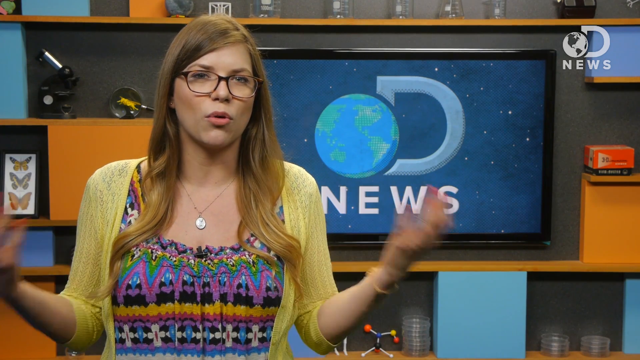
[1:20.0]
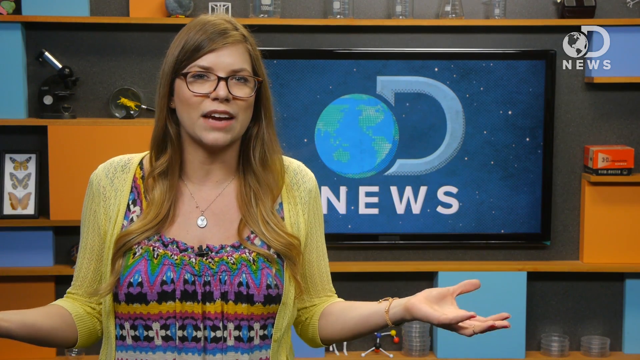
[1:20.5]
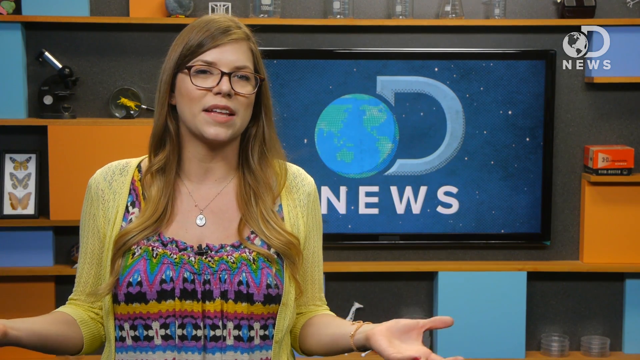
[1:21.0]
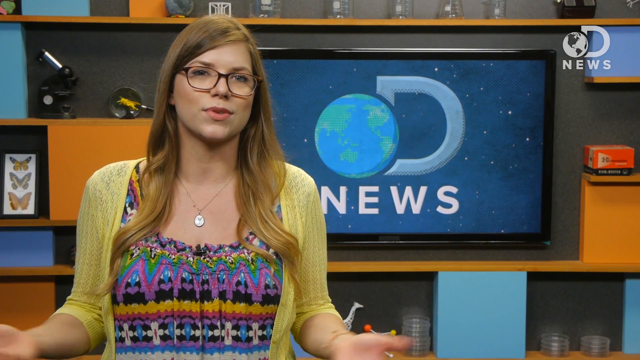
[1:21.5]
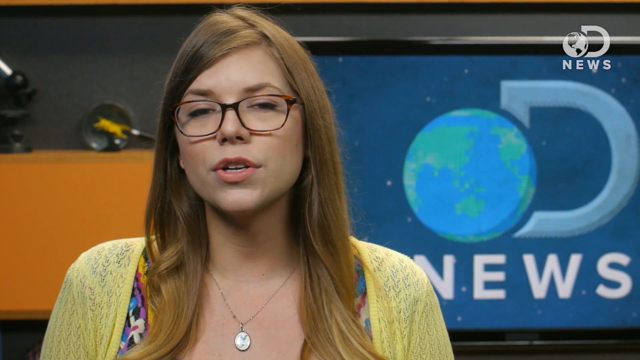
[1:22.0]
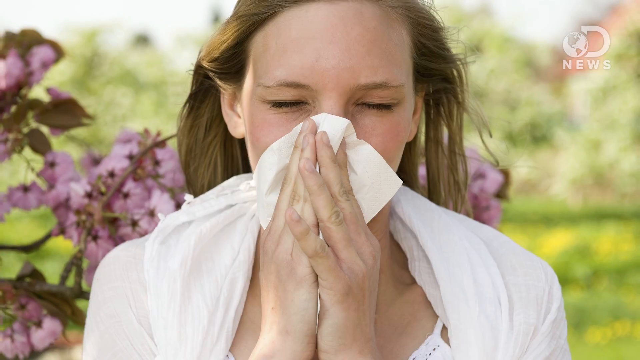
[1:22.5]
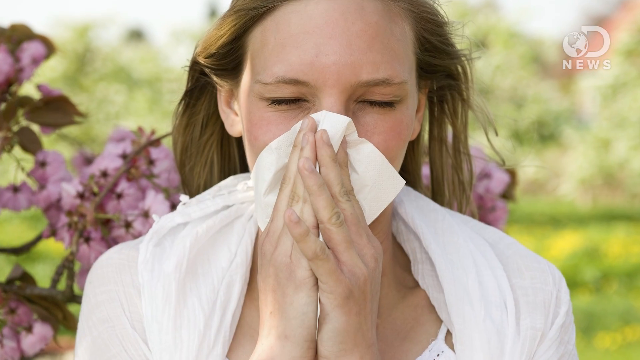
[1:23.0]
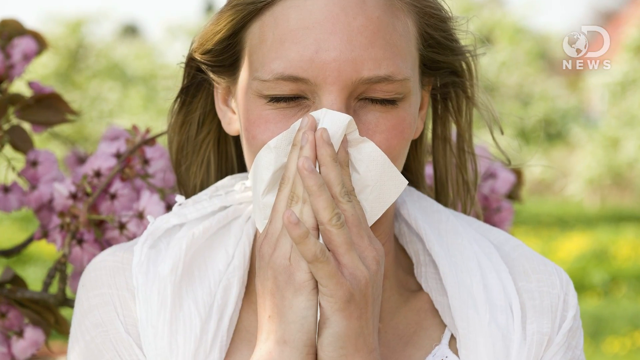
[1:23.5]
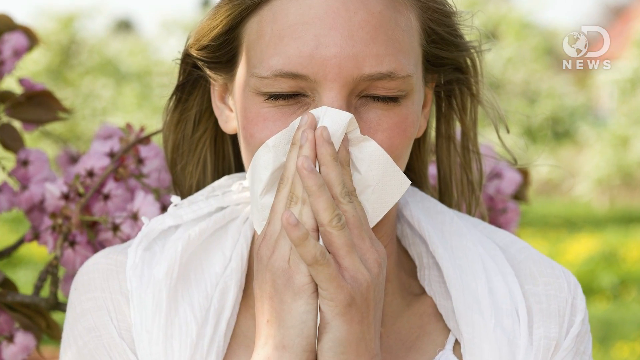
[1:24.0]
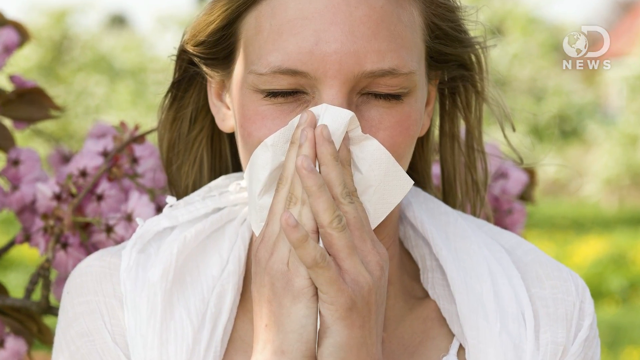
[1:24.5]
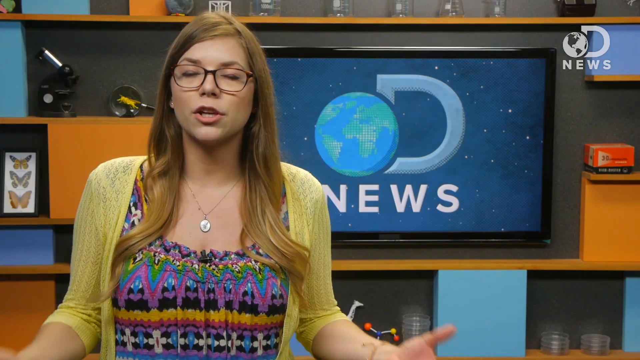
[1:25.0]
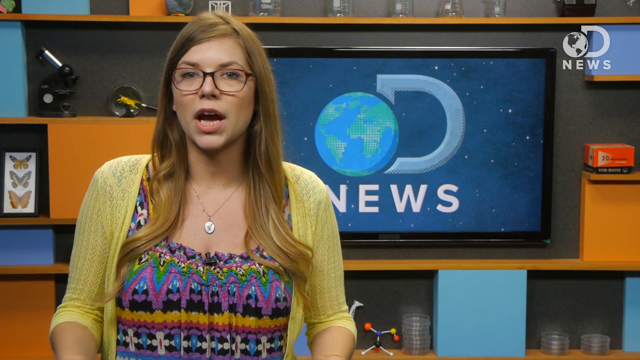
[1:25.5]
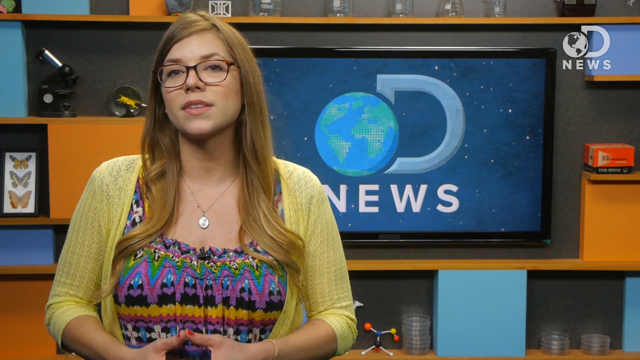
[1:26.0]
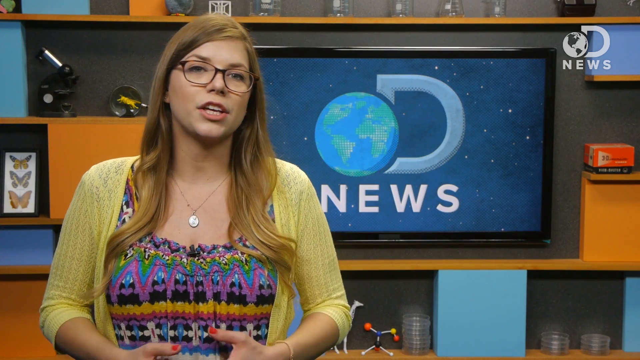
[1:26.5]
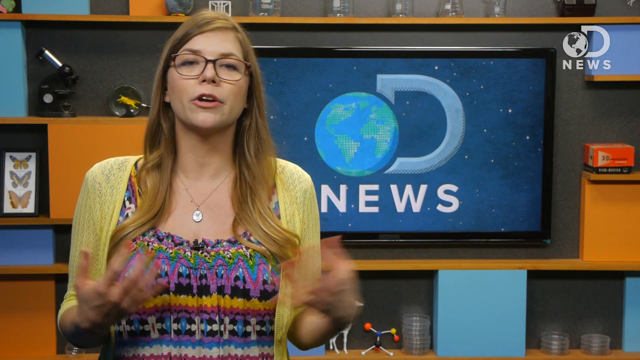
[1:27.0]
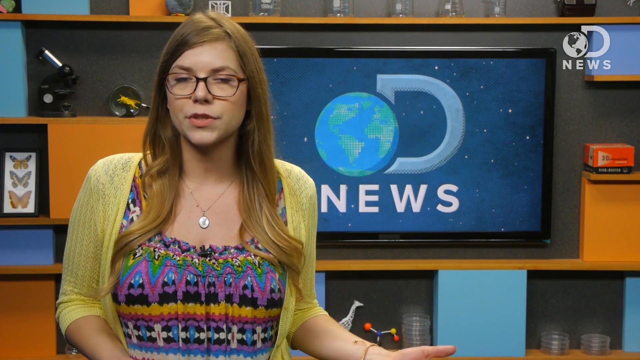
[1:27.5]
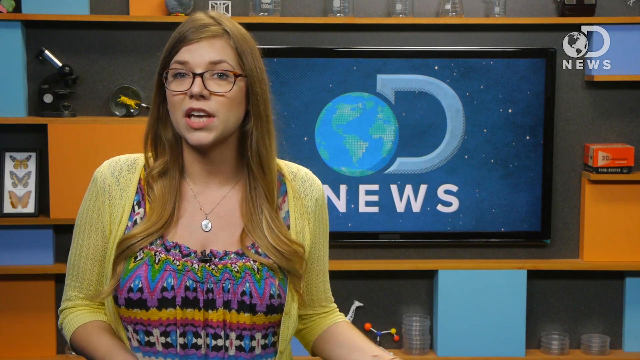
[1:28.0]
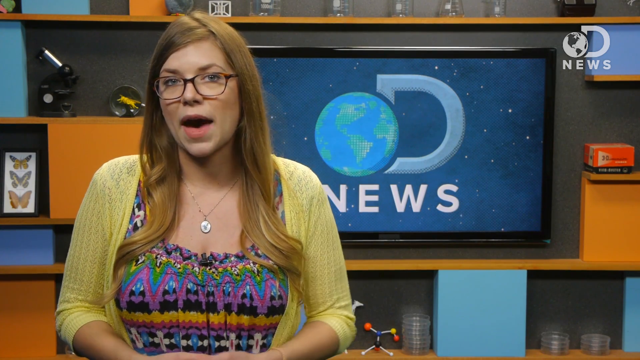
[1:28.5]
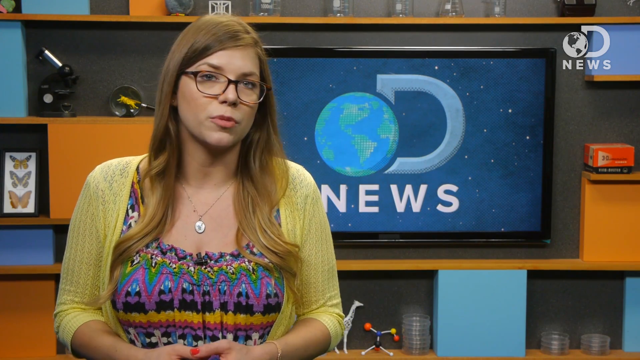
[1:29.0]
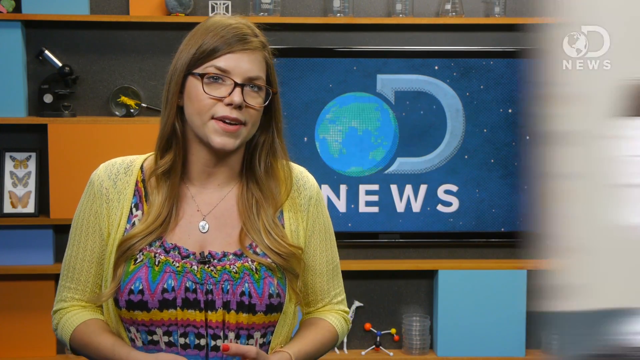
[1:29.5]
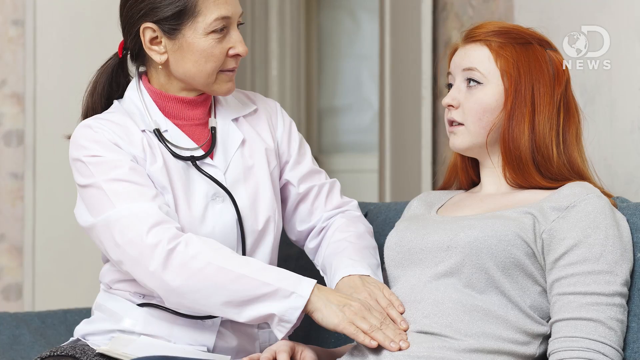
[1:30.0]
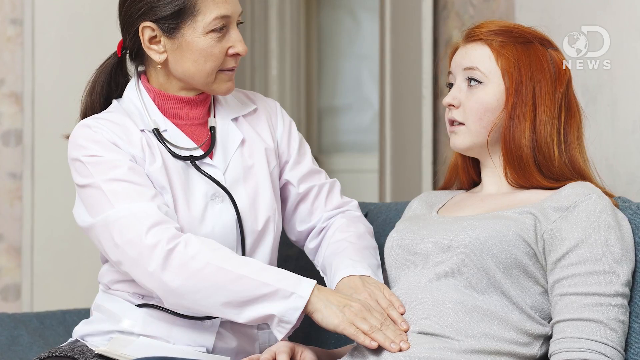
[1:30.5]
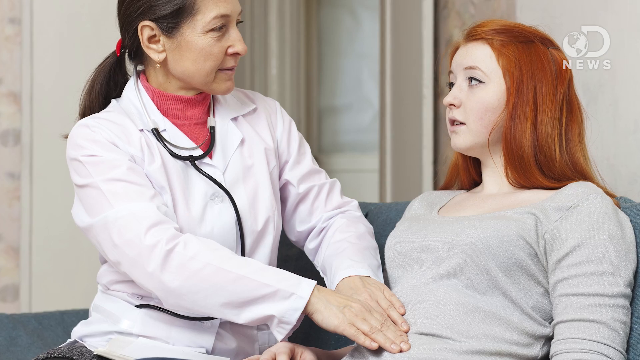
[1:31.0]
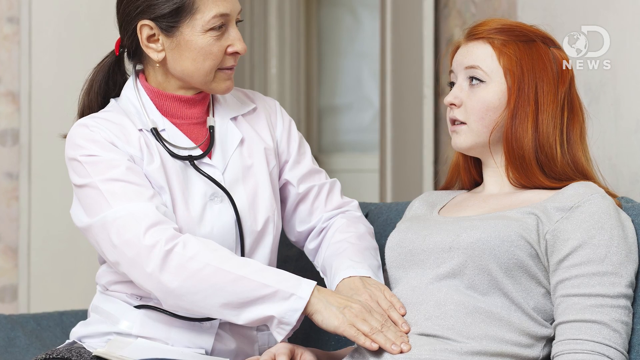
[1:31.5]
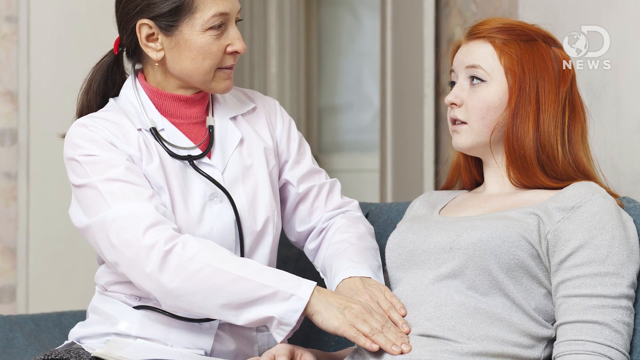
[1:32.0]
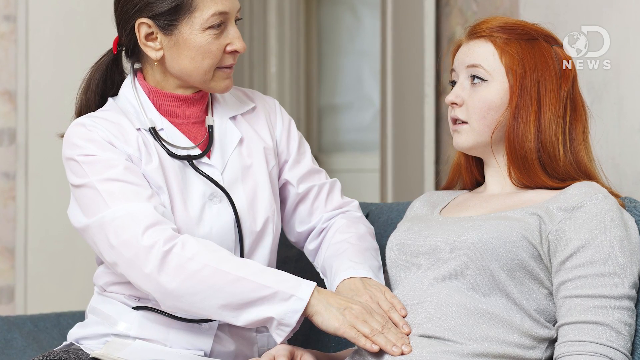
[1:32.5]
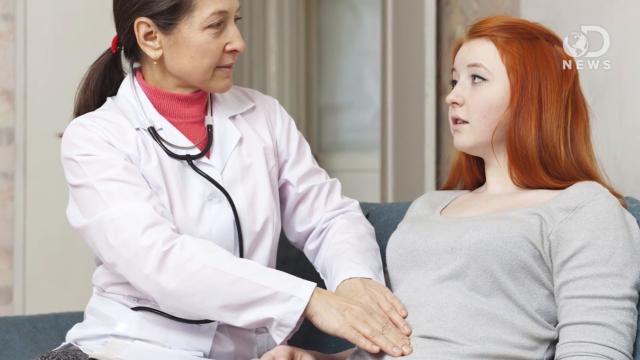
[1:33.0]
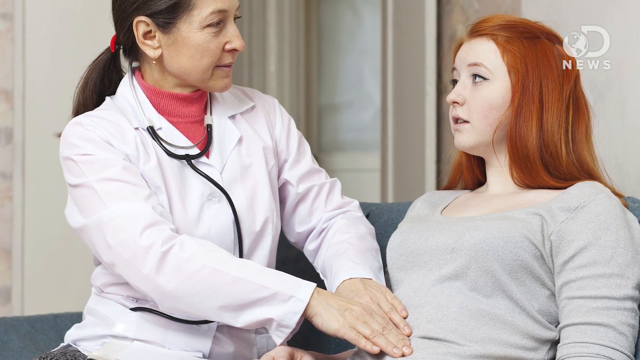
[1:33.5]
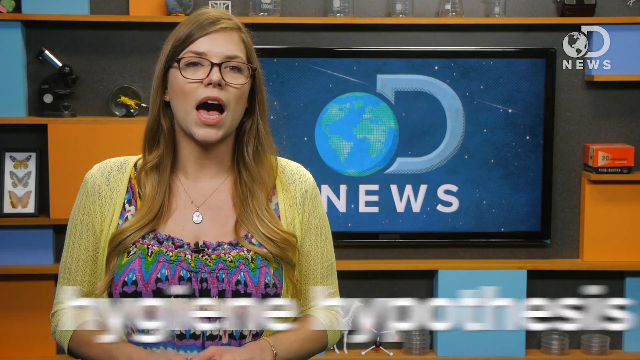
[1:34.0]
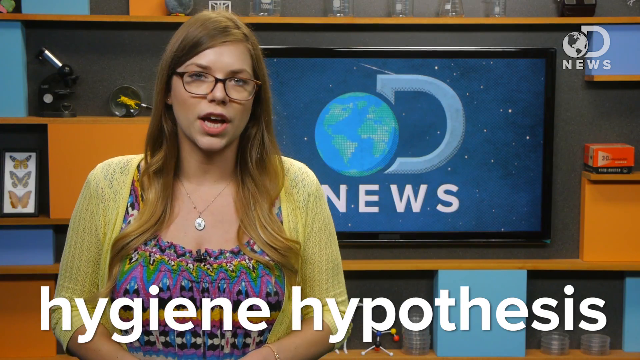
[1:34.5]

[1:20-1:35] The shot opens on what looks like someone grasping their abdominal area; the person looks like they might be wearing a full shirt or a skirt. It cuts to the speaker, who looks like a news anchor, and then to a person blowing their nose. Next, a doctor, a woman with dark hair in a ponytail and a dark black stethoscope around her neck, pushes with both hands on the abdominal area of a younger woman next to her, possibly where the appendix is, maybe checking for tenderness. The younger woman, probably her patient, has kind of gingery, orangish hair, looks a little concerned, is reclined back a little and wears a beige shirt; she looks like she could be in pain or very tired. The doctor talks with her. Text says "hygiene hypothesis".